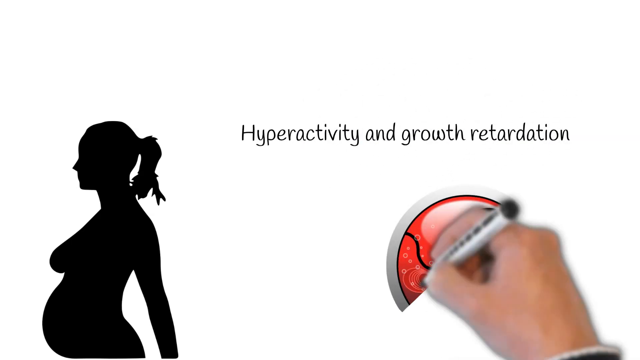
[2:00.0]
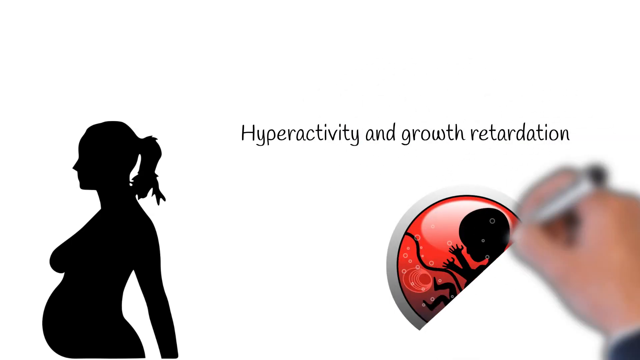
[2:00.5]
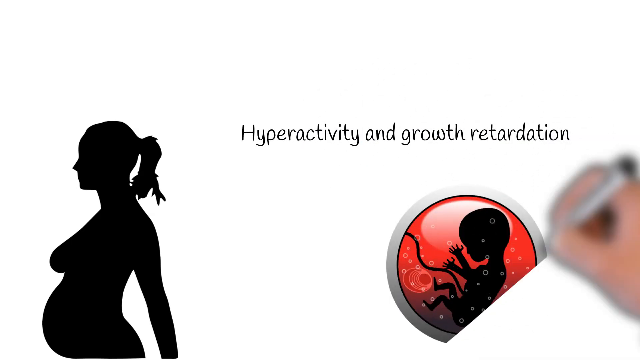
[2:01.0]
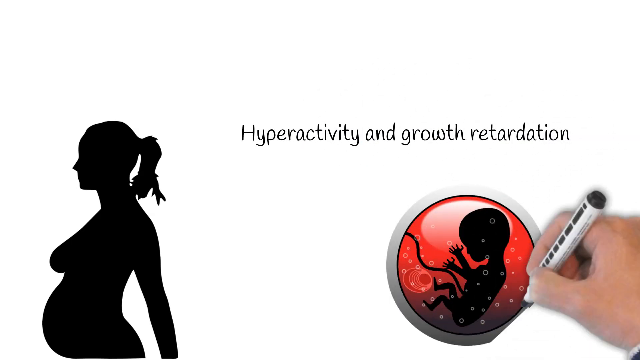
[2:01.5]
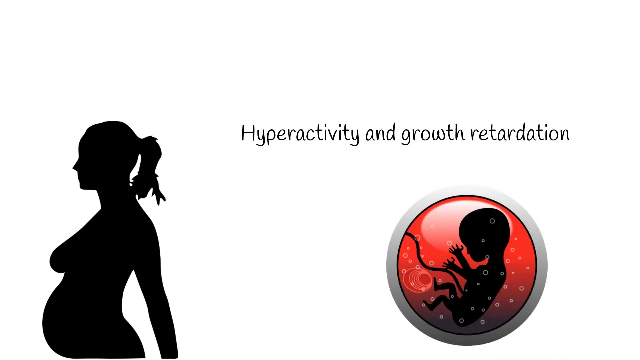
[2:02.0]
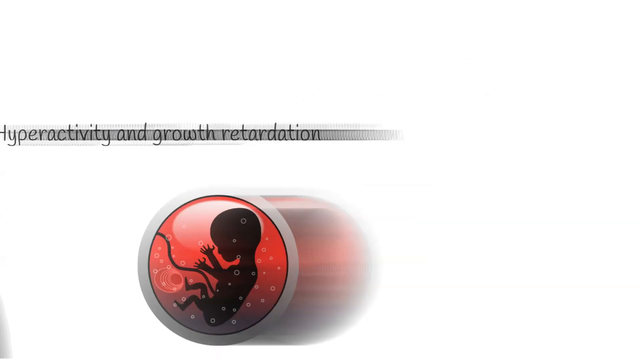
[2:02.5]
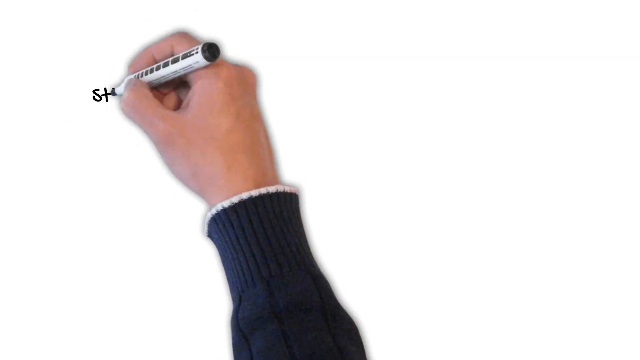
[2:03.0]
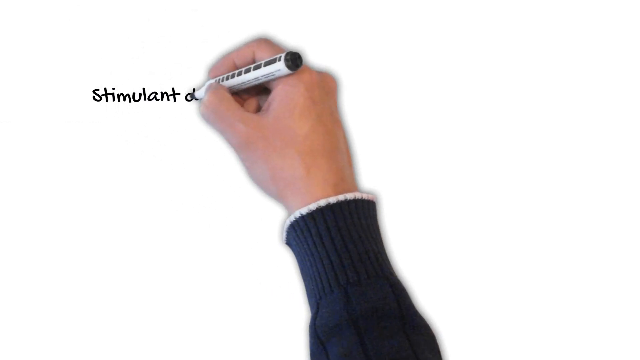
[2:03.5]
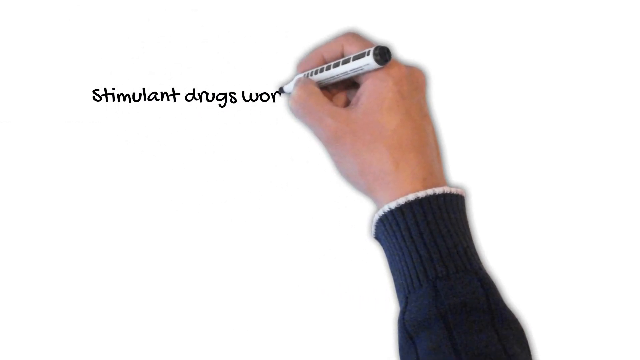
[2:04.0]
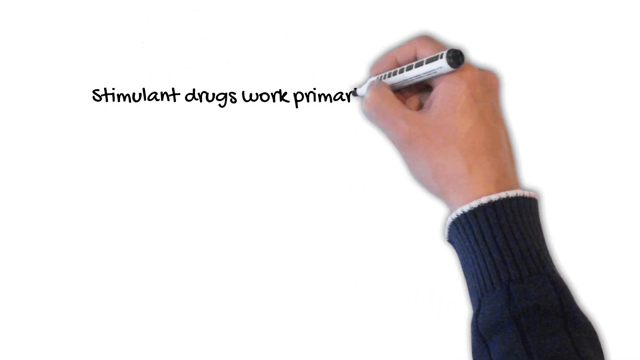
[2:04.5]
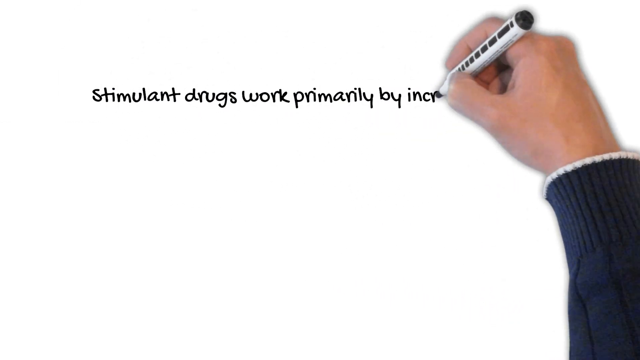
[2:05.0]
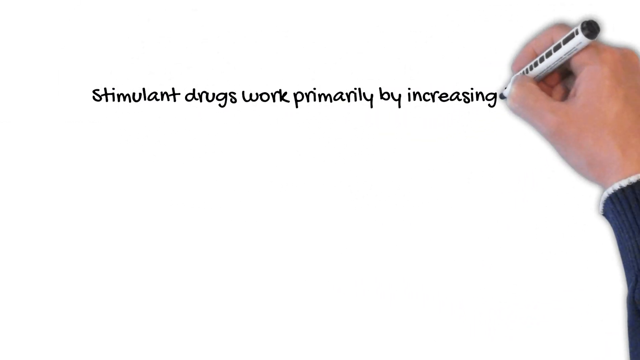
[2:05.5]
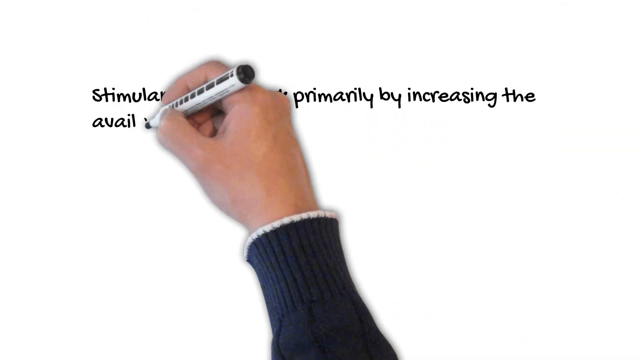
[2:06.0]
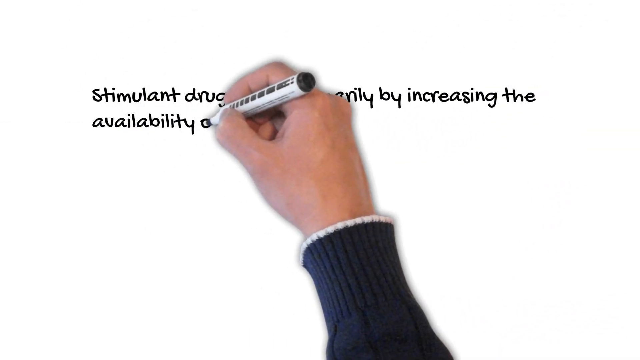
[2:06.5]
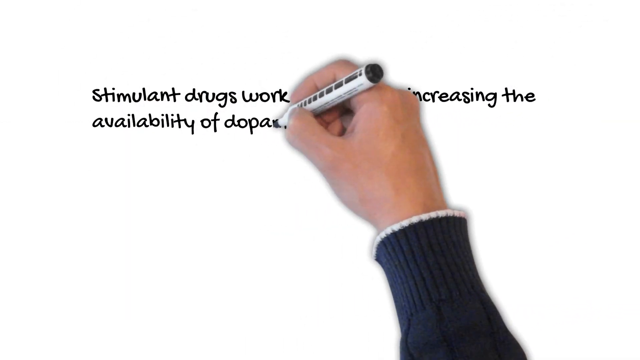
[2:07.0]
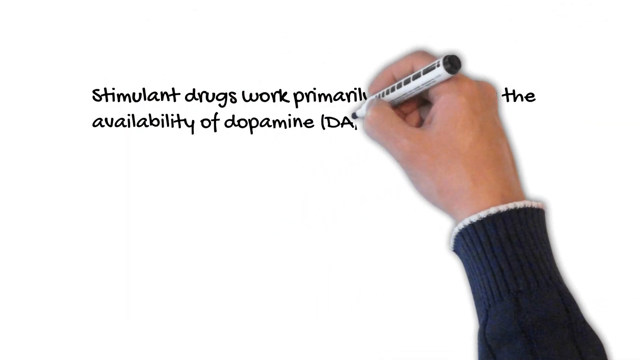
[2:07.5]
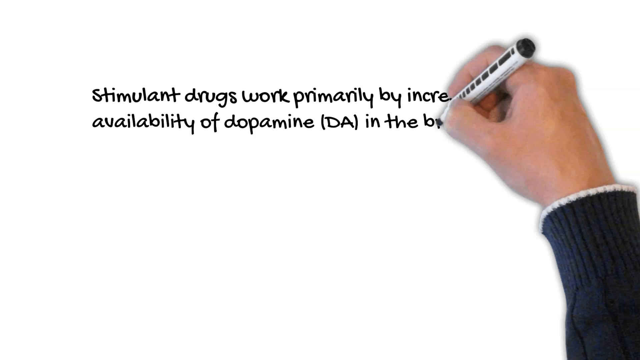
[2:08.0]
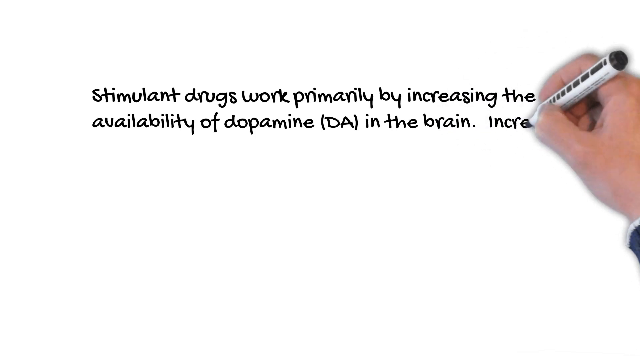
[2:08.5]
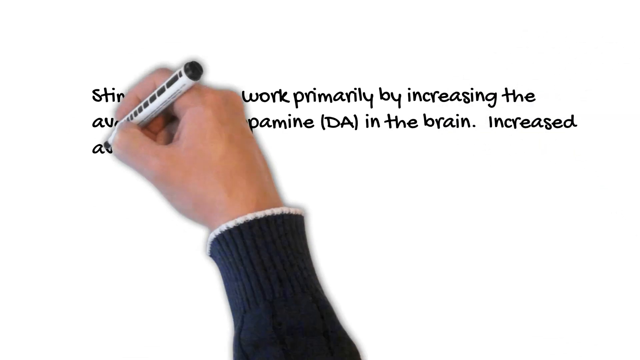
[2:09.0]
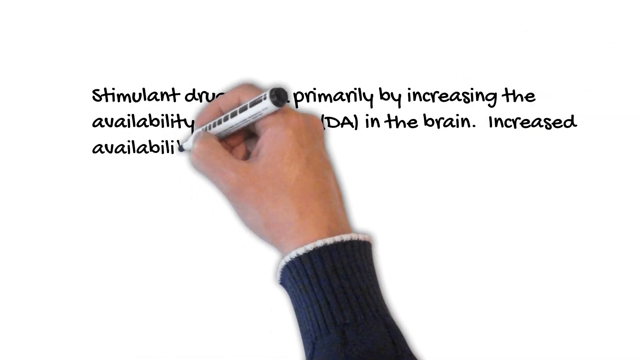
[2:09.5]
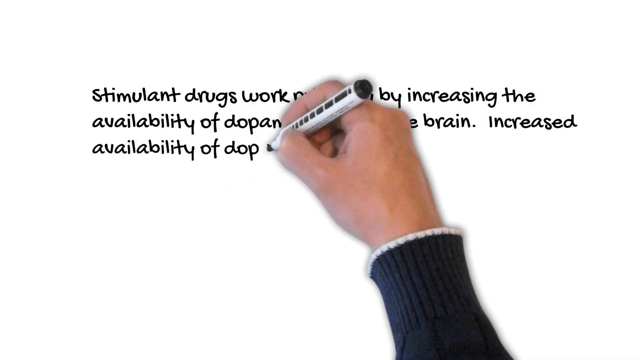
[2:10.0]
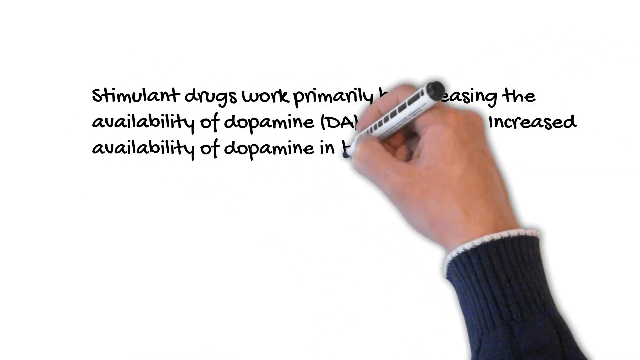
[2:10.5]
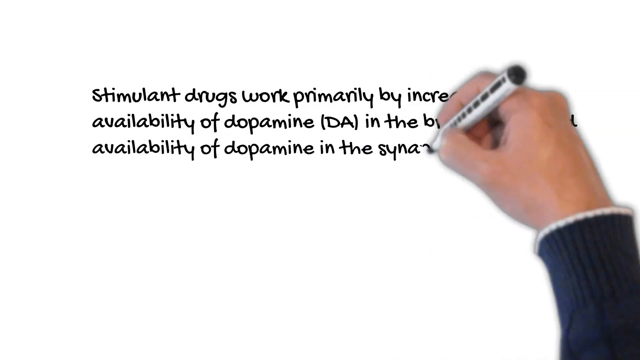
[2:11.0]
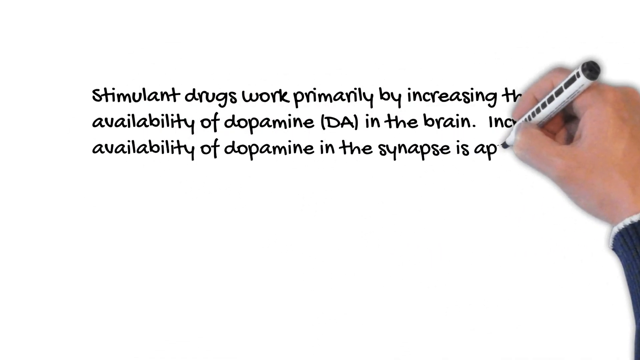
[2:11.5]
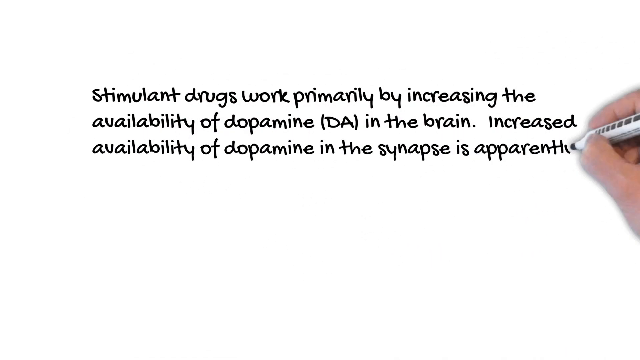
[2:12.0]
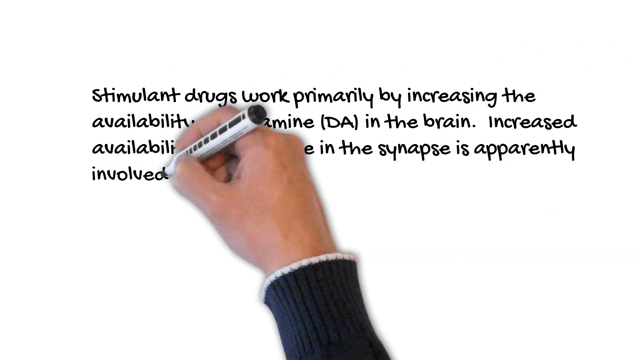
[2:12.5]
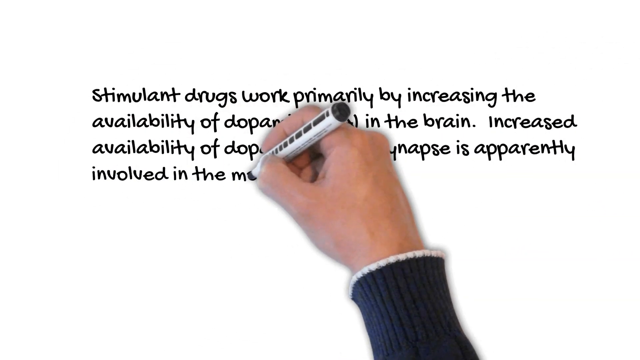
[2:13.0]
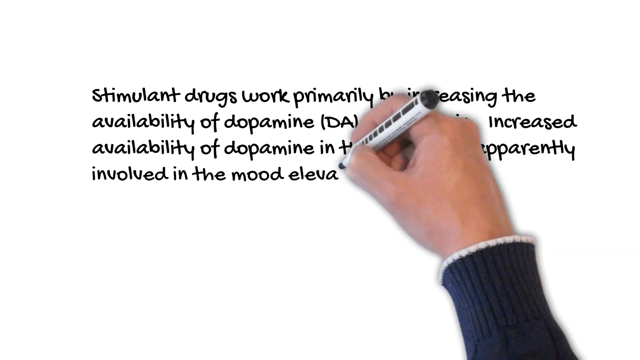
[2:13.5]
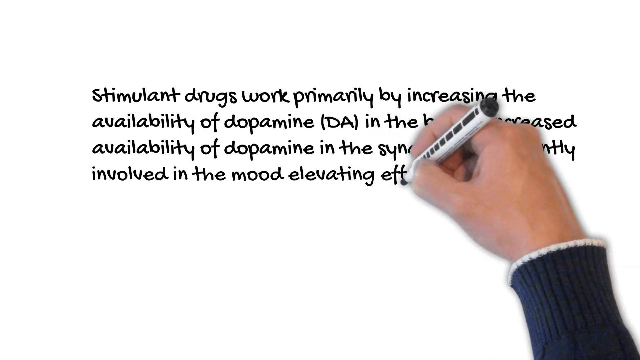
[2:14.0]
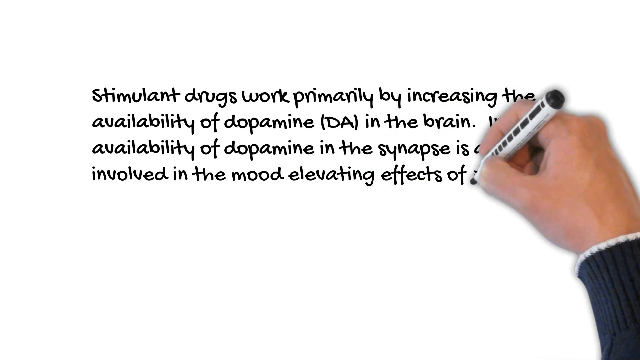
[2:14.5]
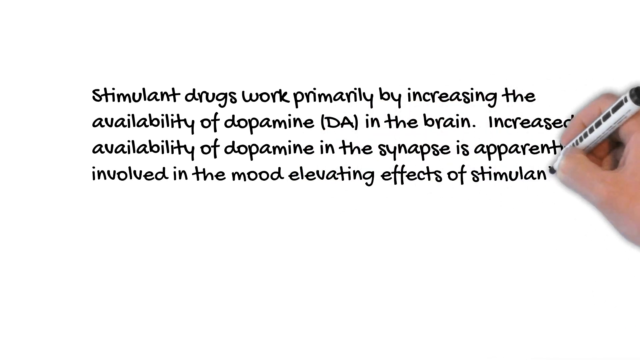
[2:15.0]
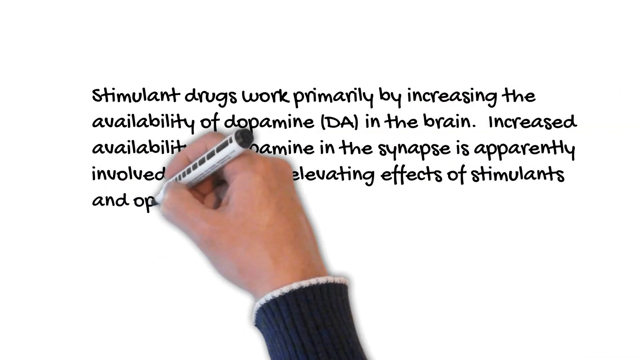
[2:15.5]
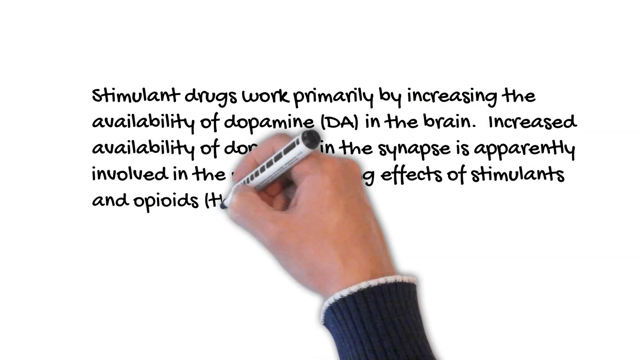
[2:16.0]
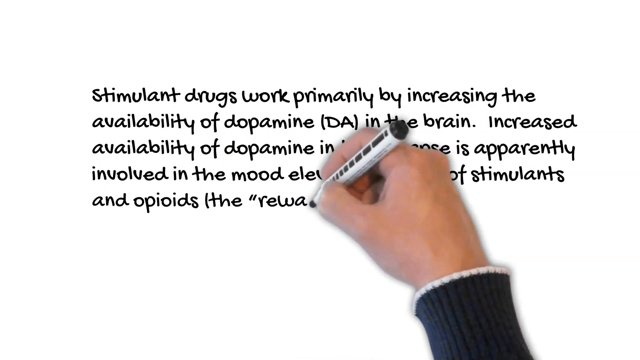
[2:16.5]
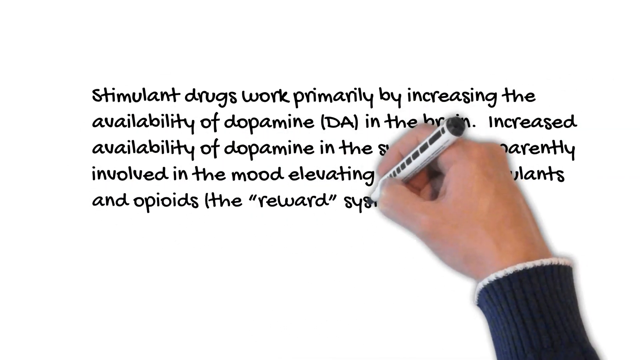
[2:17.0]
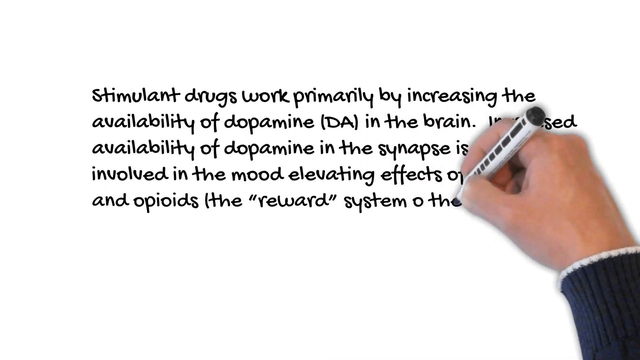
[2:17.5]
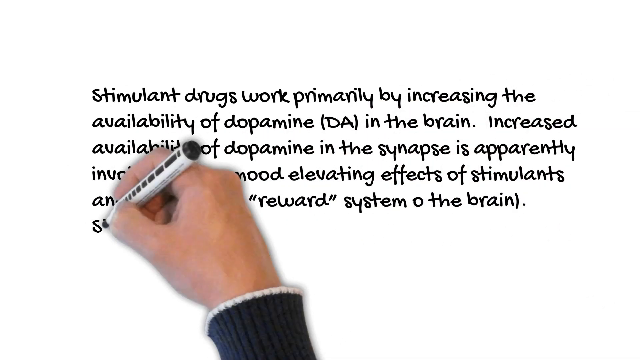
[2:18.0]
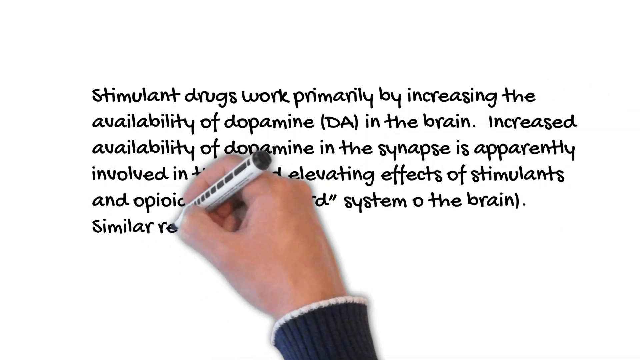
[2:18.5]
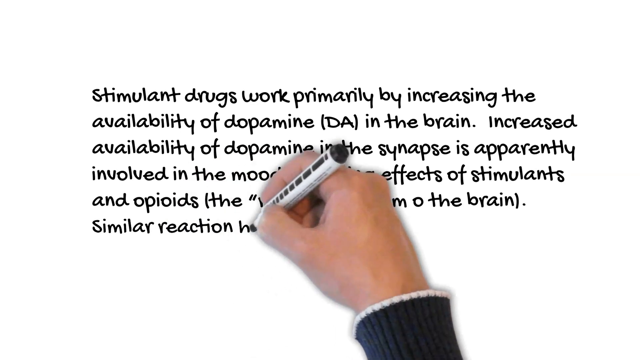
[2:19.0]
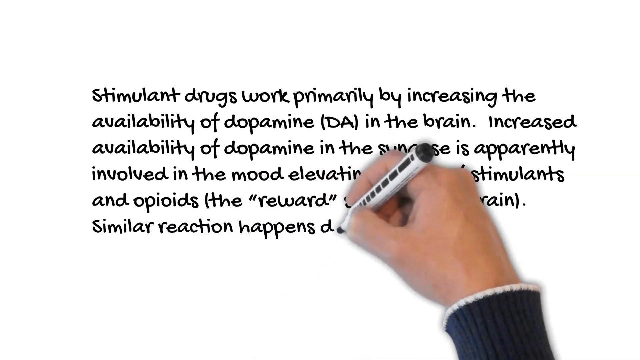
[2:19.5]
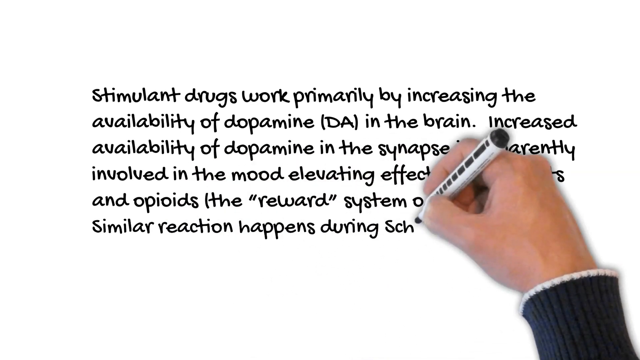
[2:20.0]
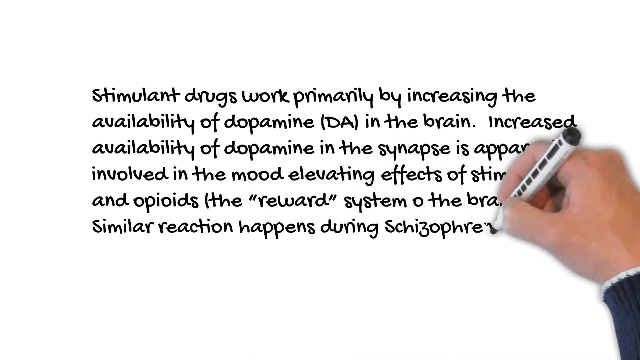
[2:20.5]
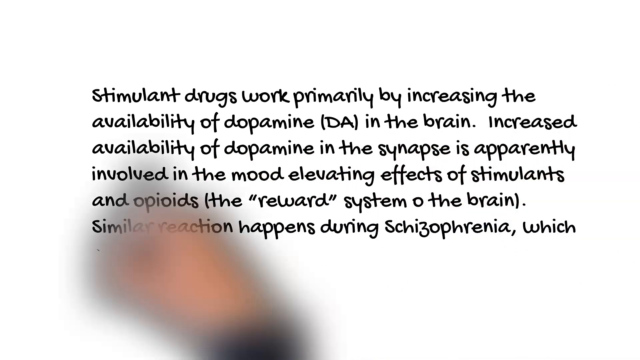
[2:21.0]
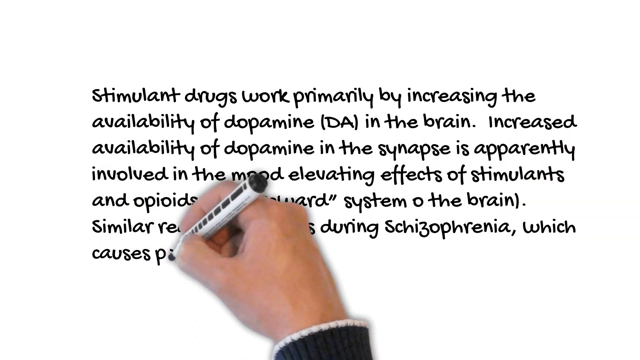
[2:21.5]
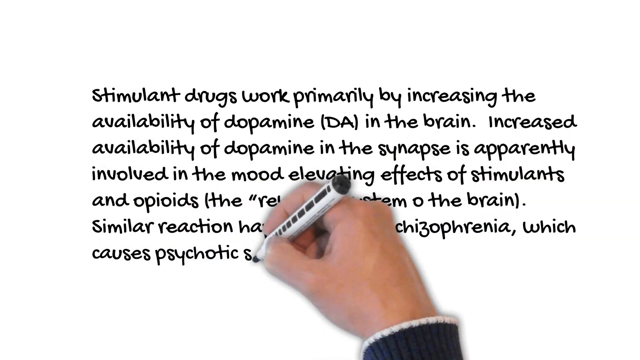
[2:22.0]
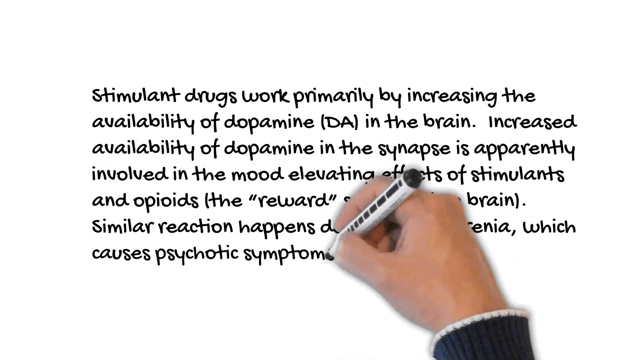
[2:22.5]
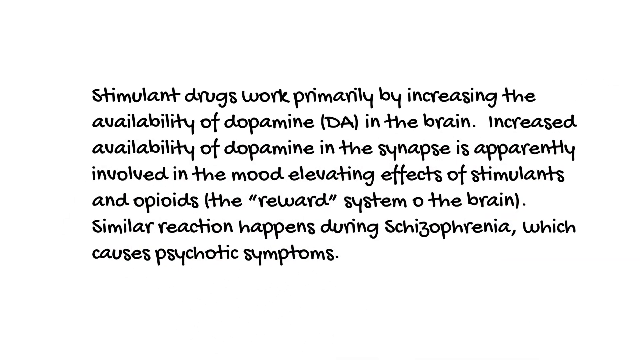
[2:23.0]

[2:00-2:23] On the left of a whiteboard is the silhouette of an undressed pregnant woman, her belly protruding and her back pushing forward to support the baby. In the middle it says "hyperactivity and growth retardation," and the animated hand holds a pen and scribbles across the board. In a circle being drawn on the right is a baby inside the womb, with the umbilical cord going off to the left, a red background, and circles all throughout suggesting a watery environment; the baby has its hands and feet wiggling and no hair on its head. The scene slides off to the left, and on the next blank screen the hand writes: "stimulant drugs work primarily by increasing the availability of dopamine, DA, in the brain. Increased availability of dopamine in the synapse is apparently involved in mood elevation effects of stimulants and opioids, the reward system of the brain. Similar reaction happens during schizophrenia which causes psychotic symptoms."